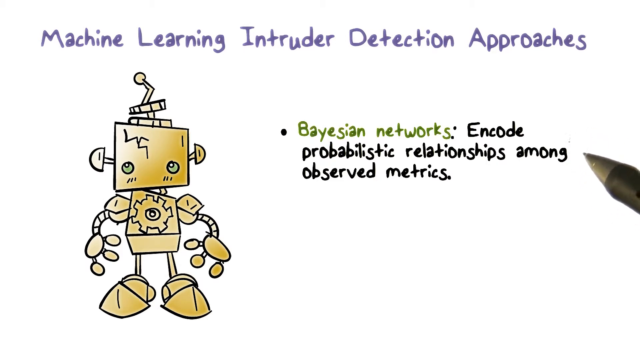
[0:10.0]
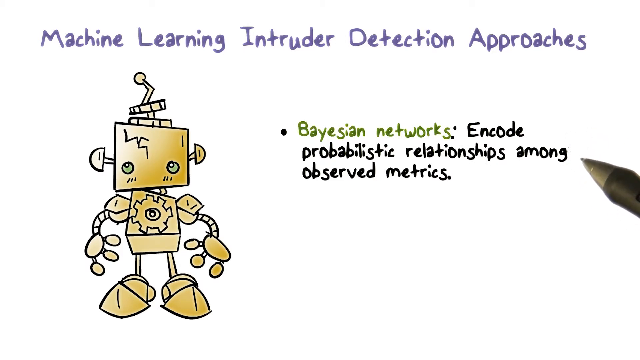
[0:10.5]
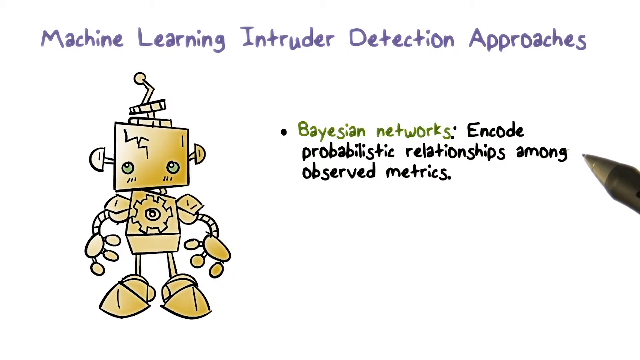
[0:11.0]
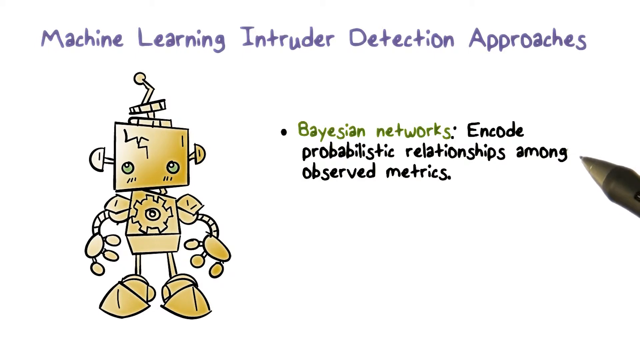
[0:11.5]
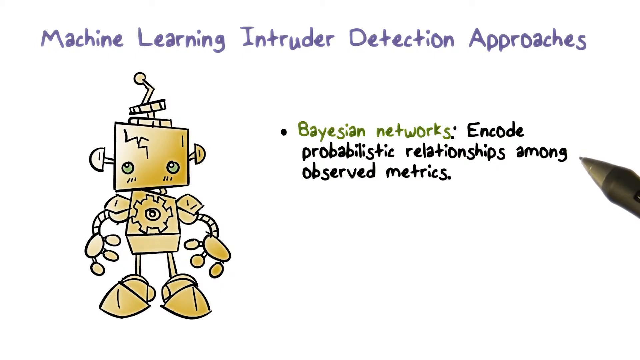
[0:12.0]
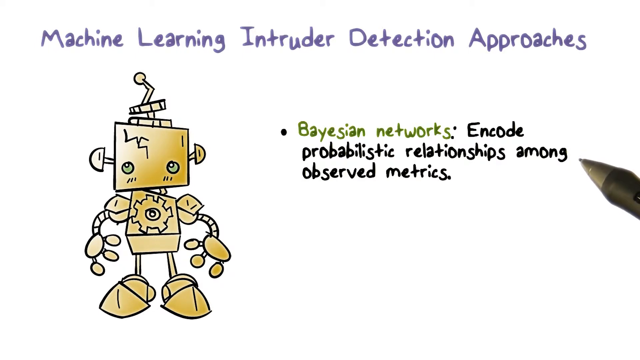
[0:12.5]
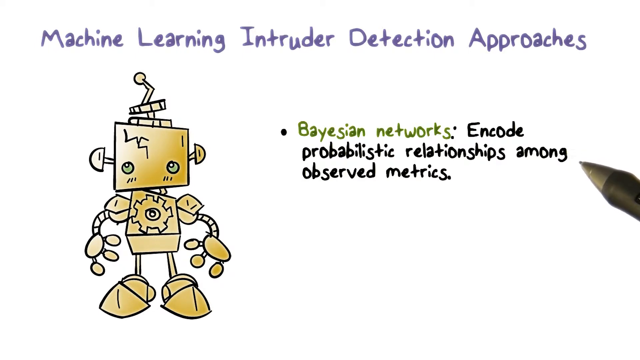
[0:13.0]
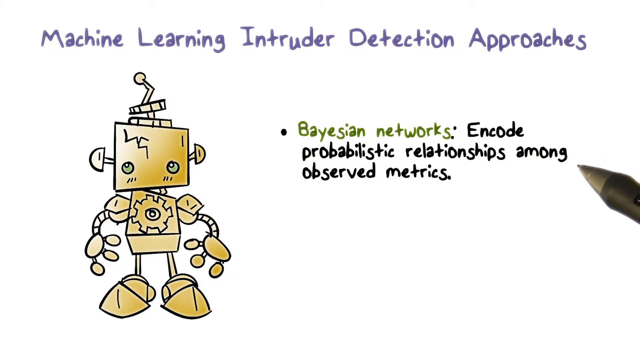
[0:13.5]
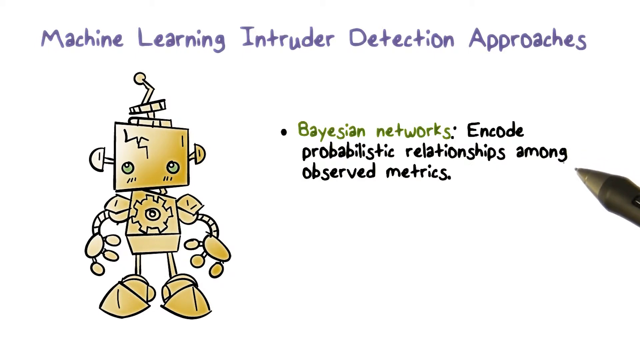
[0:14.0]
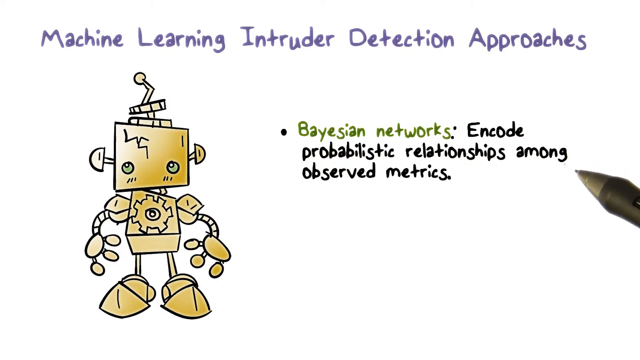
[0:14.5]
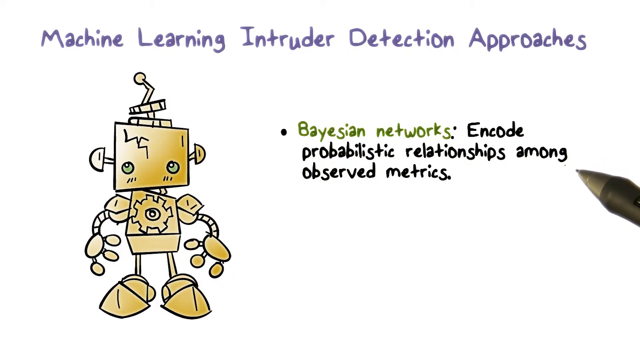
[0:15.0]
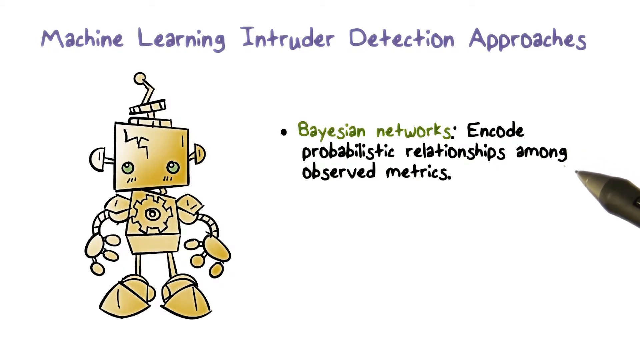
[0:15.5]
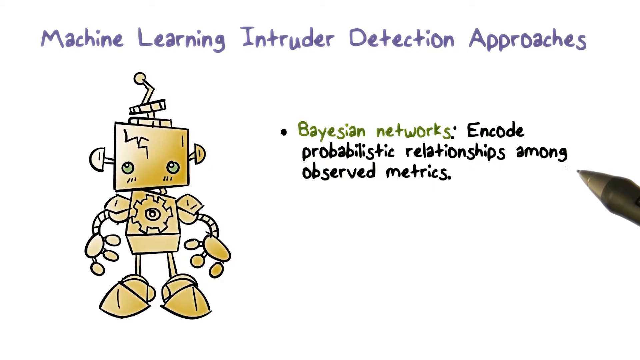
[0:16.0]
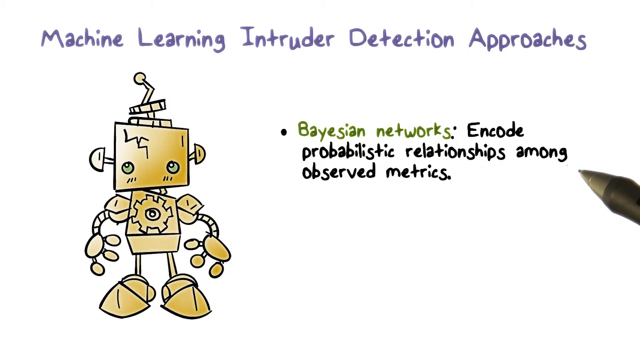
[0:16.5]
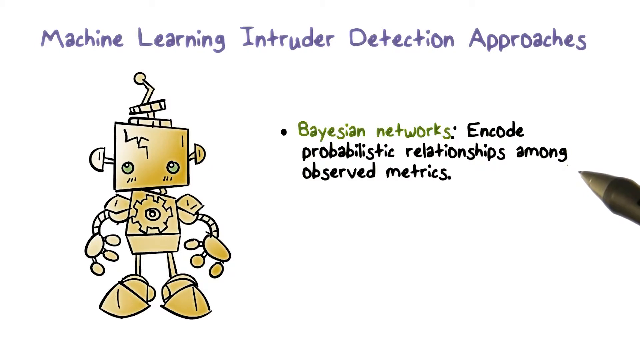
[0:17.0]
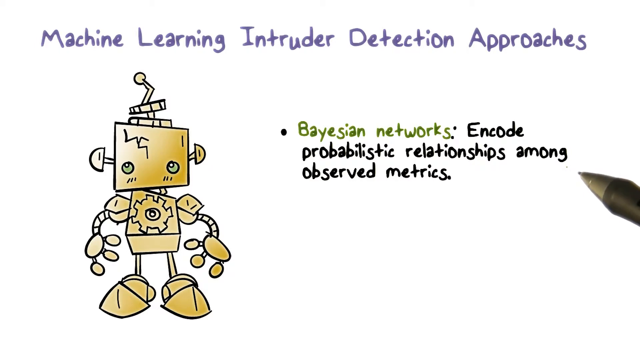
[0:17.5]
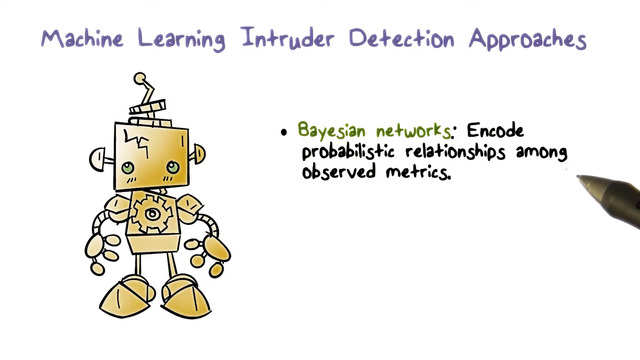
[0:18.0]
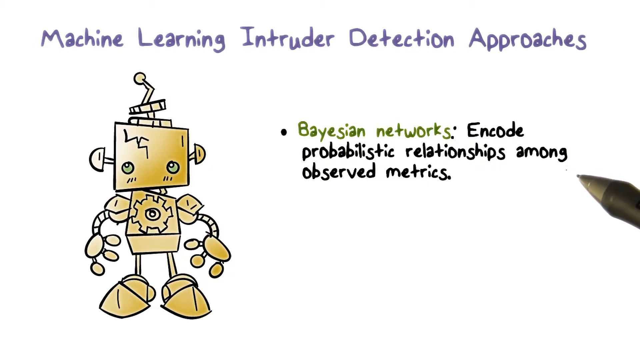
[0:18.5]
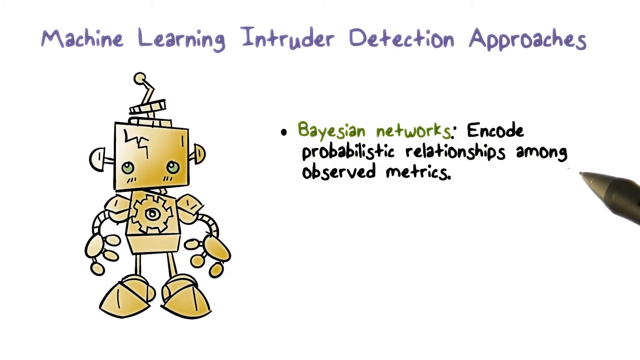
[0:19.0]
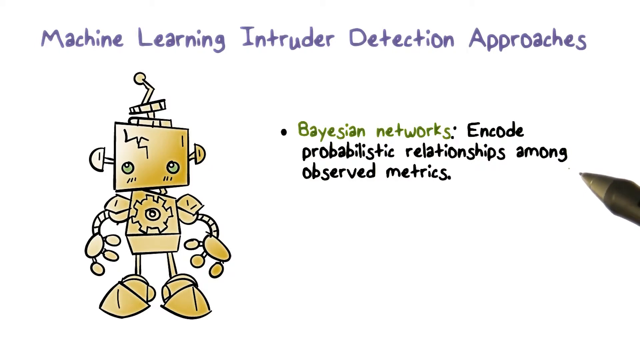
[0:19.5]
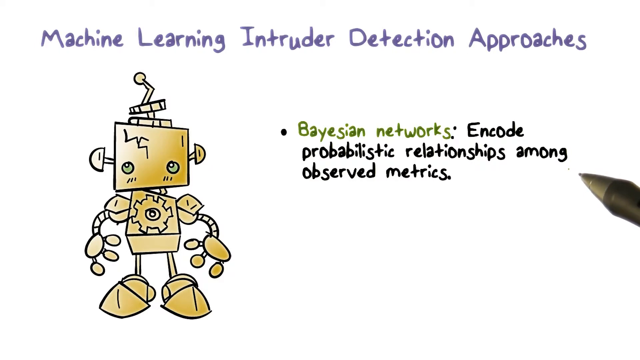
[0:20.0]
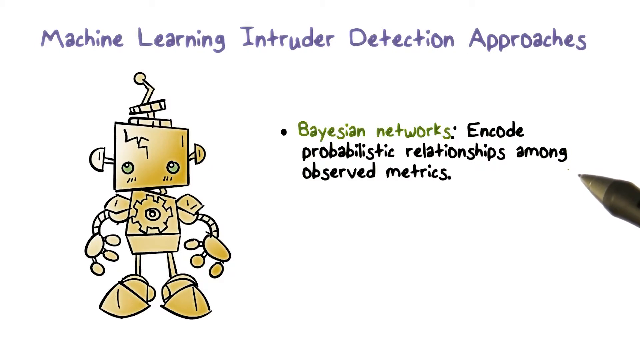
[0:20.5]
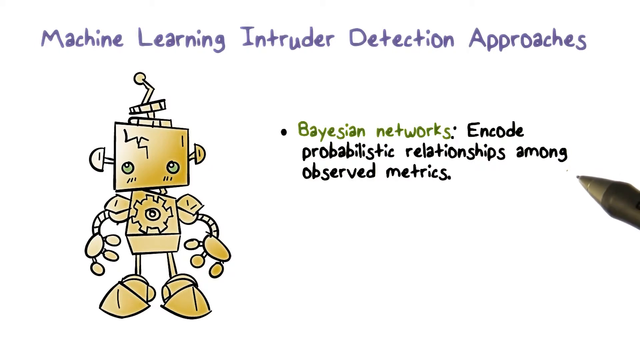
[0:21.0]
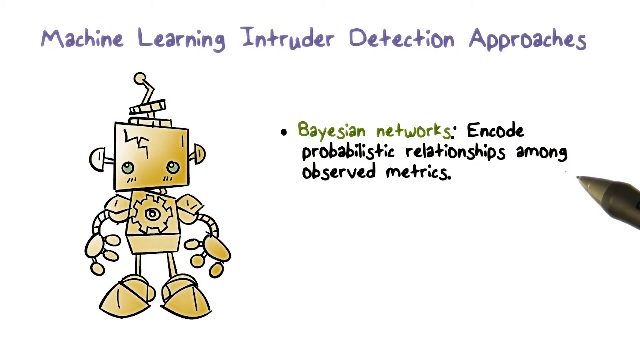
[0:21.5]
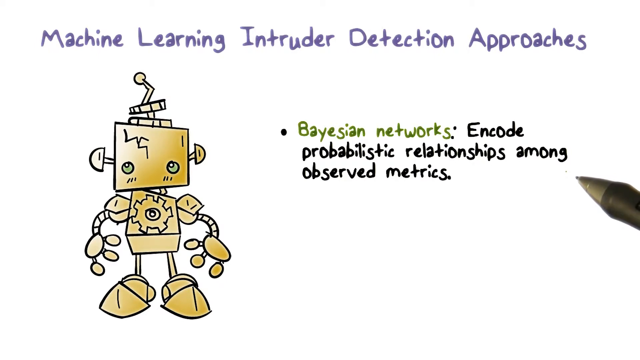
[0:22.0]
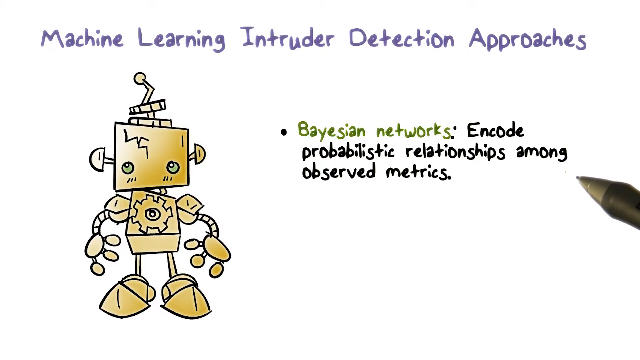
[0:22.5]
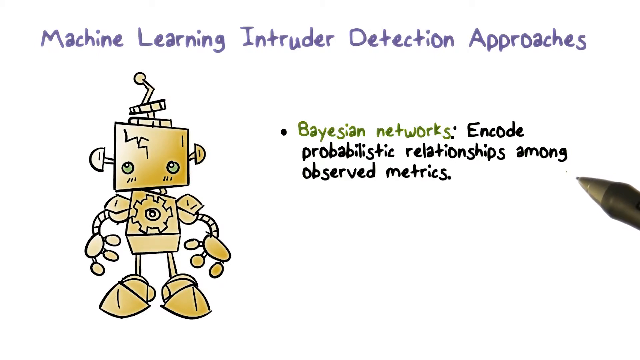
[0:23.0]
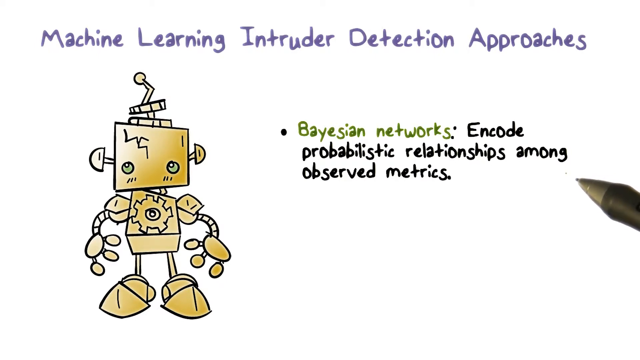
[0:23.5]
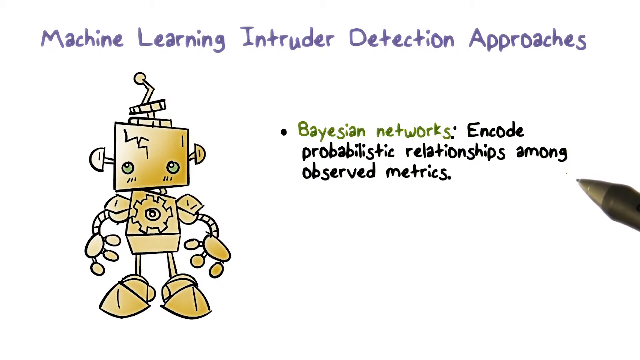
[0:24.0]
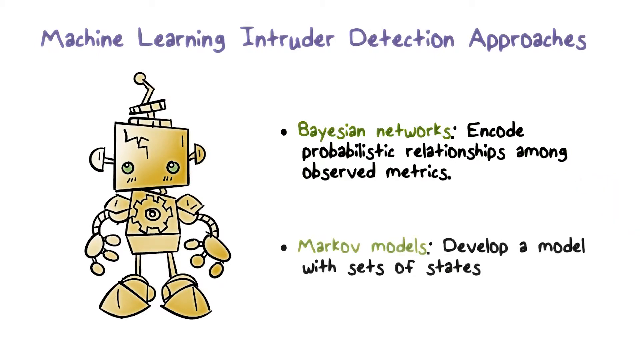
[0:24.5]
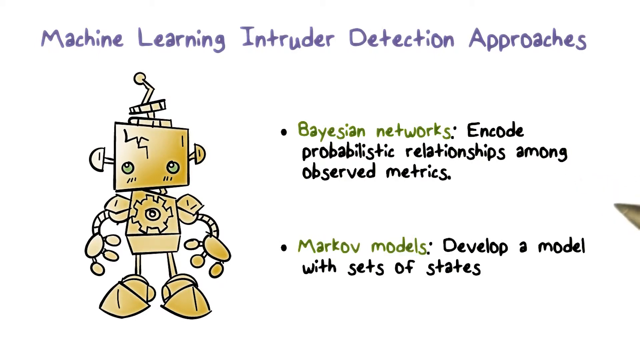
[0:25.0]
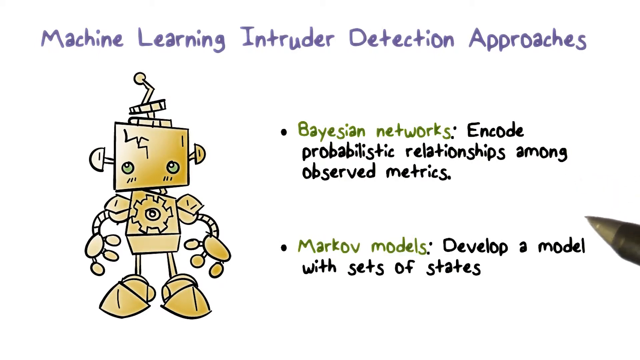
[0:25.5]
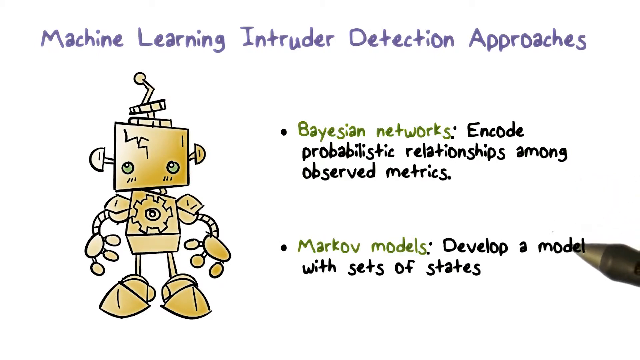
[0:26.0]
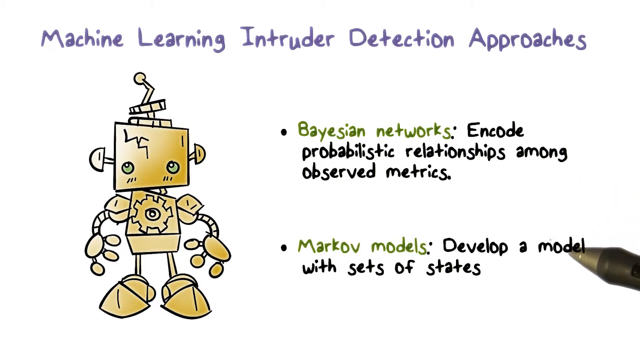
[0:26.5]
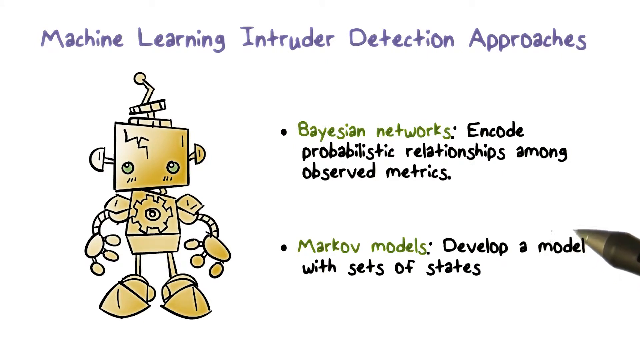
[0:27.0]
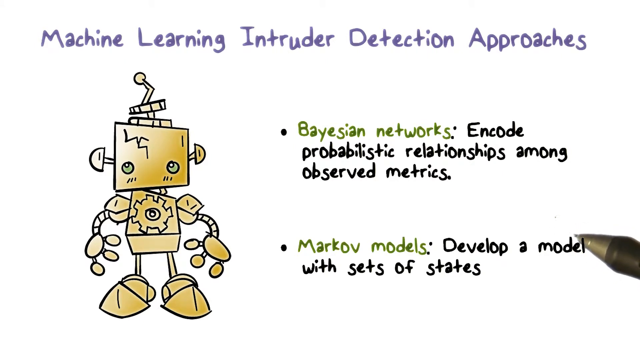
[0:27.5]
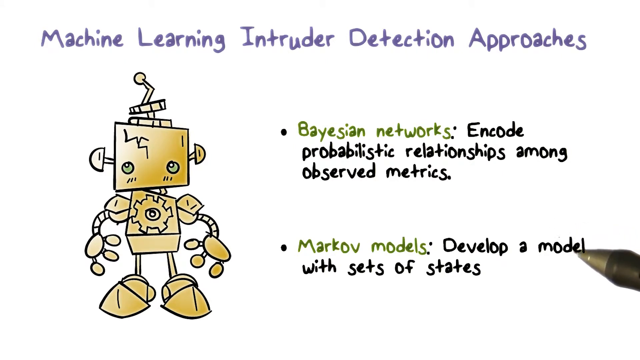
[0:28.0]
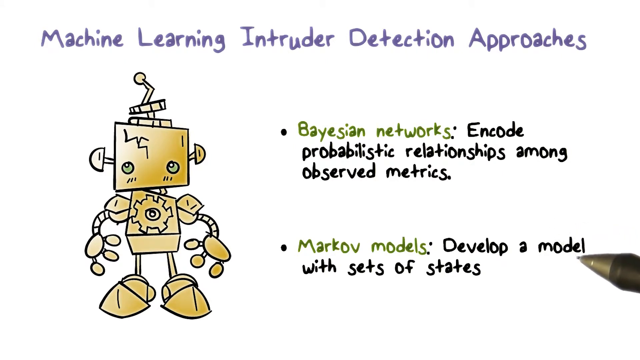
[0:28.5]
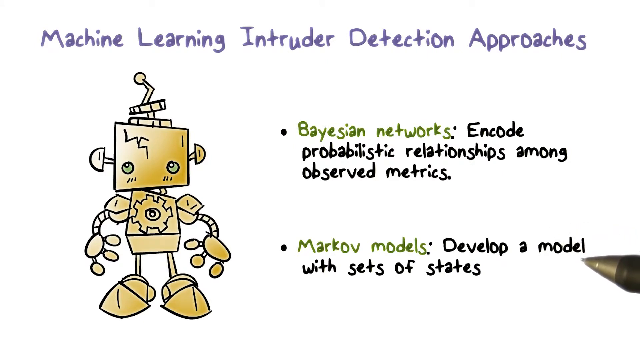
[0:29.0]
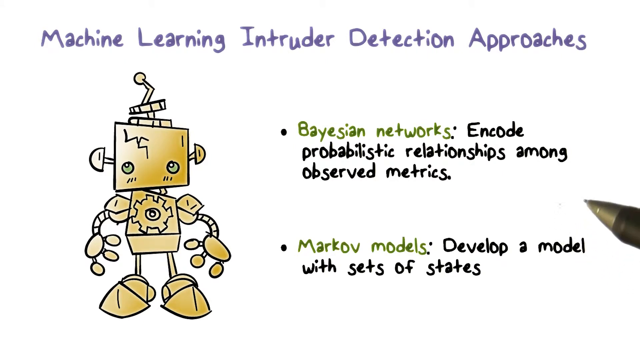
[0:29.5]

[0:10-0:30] On the white paper, a pen on the right side is writing; the bullet point reads "Biasion Networks encode problematic relationship among observed metrics." The pencil on the right moves very slightly, and the little cartoon character that was drawn remains. The pencil comes back up and makes another bullet mark, with text including "develop a model, set of states." The pencil points toward the word "model," moving up and down. In the first bullet point, "Biasion Networks" is in green, followed by a semicolon, and the rest of the wording is in black, in a different type of print that slants slightly to the right and is not very even. In the second bullet point, the first word, ending in "models," is also green, and the rest of that sentence is black. The pencil is burgundy, held upward as a person would hold it, and comes down to a gold point. The character on the left side is gold. He has multiple objects that would be his arms and hands, and lines from his rectangular body go down into oblong objects that would be his feet.